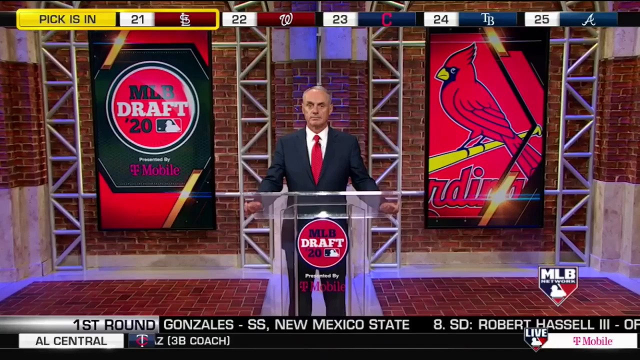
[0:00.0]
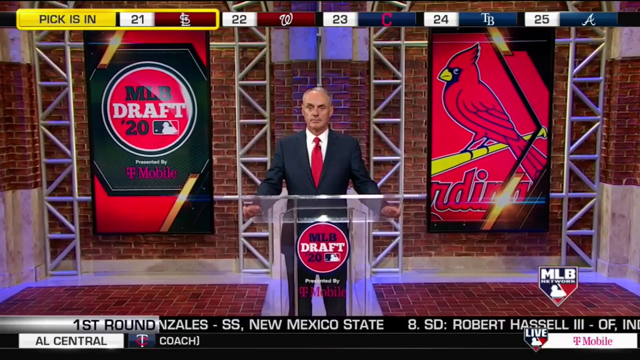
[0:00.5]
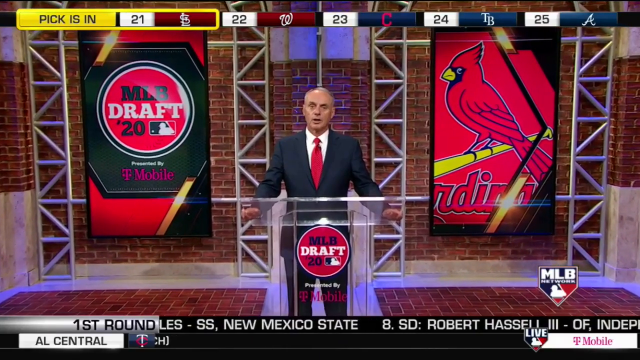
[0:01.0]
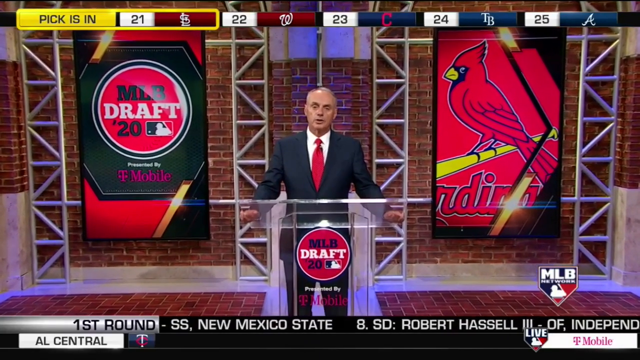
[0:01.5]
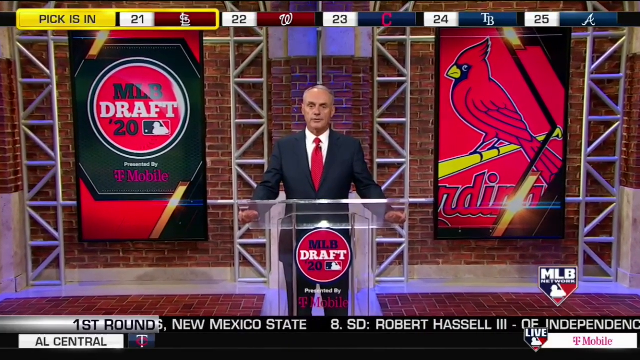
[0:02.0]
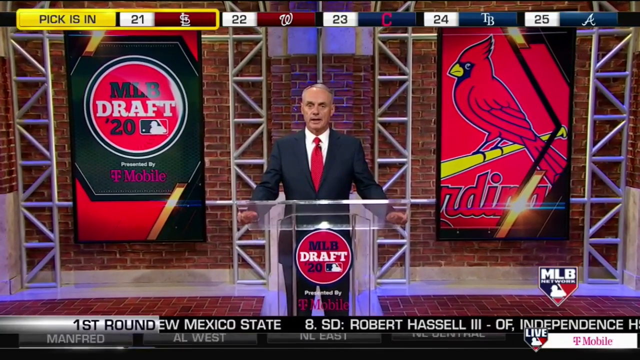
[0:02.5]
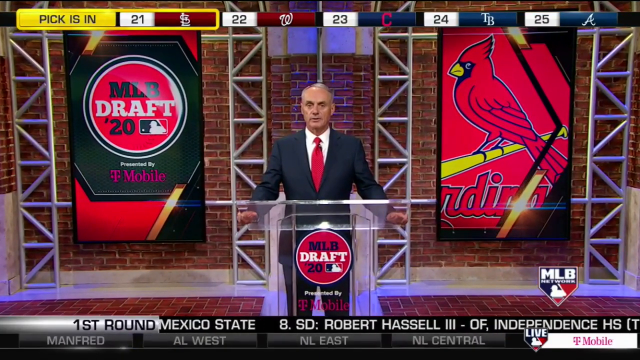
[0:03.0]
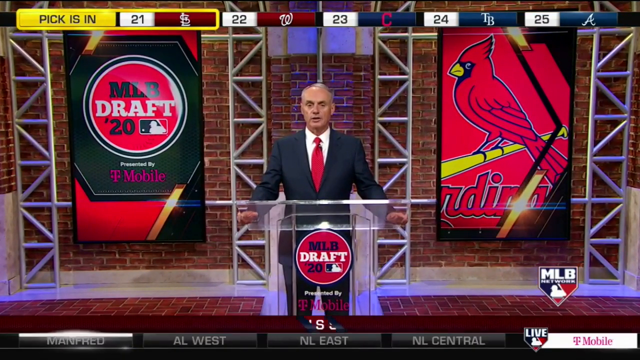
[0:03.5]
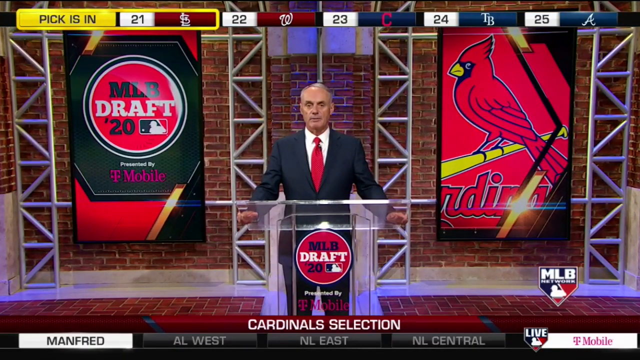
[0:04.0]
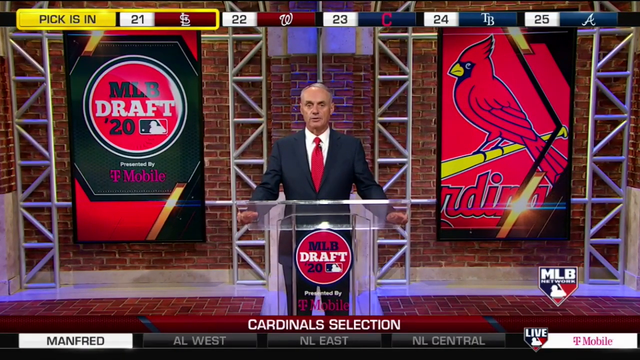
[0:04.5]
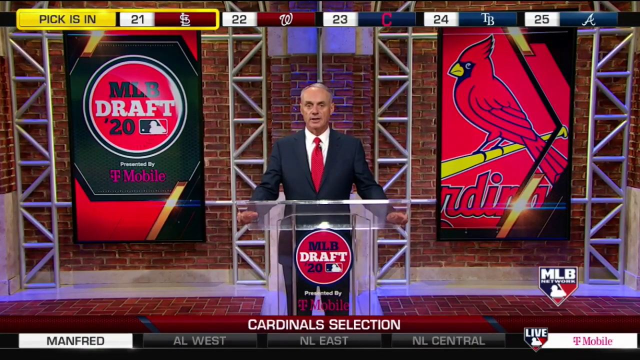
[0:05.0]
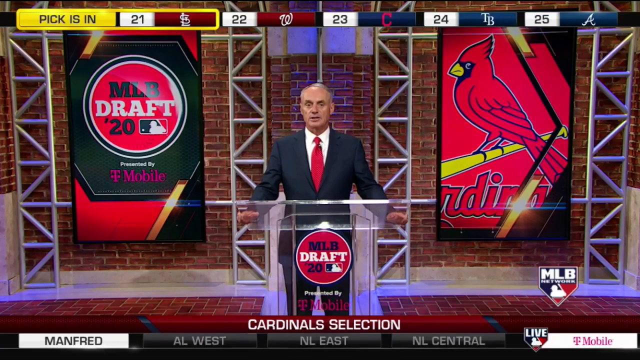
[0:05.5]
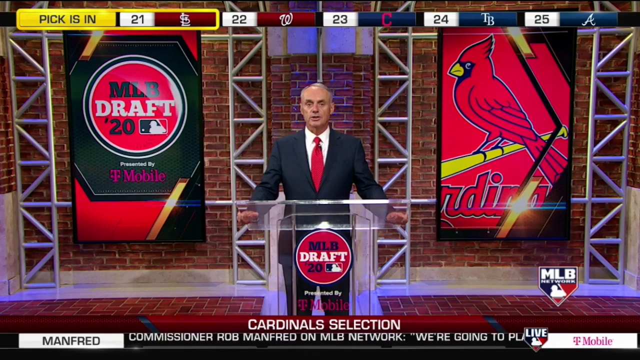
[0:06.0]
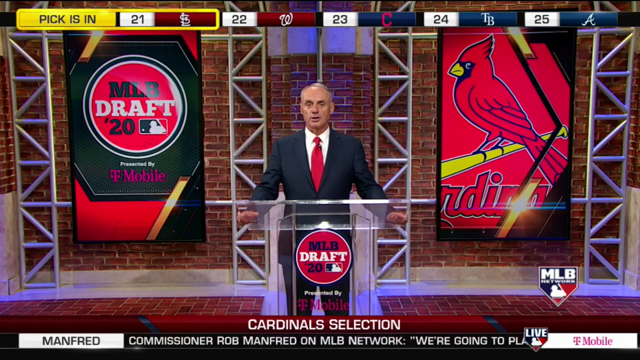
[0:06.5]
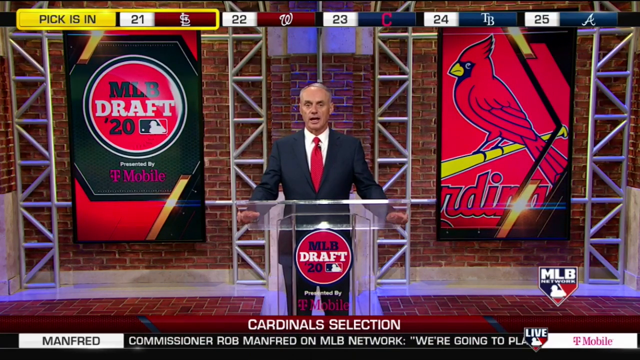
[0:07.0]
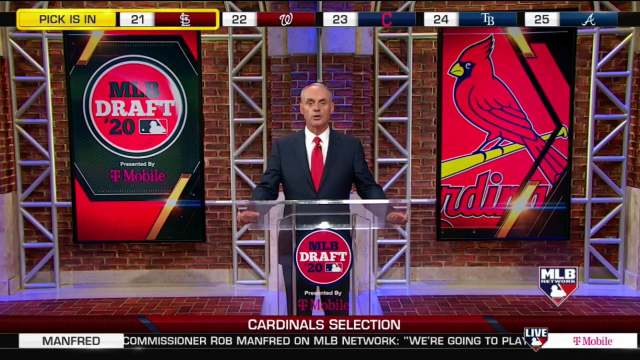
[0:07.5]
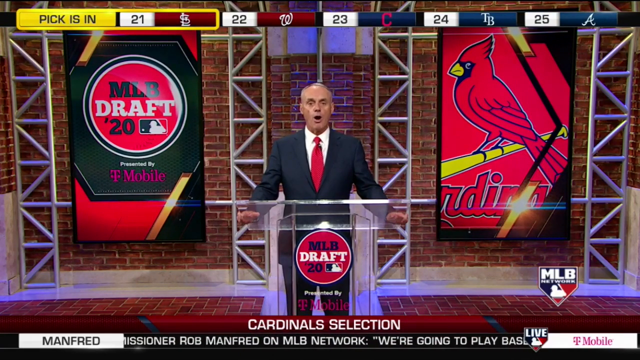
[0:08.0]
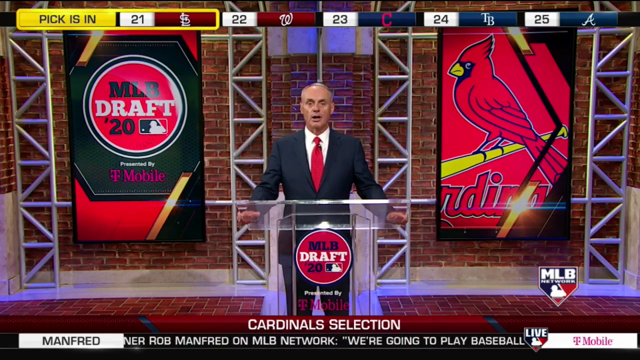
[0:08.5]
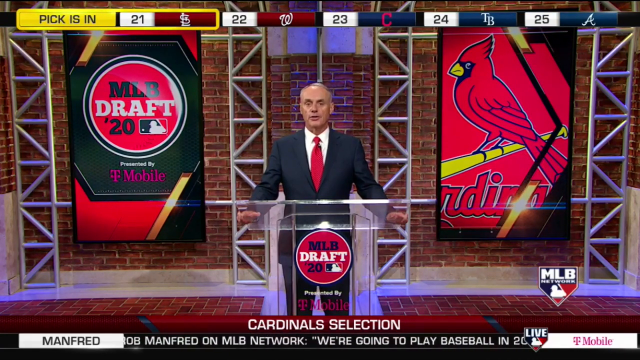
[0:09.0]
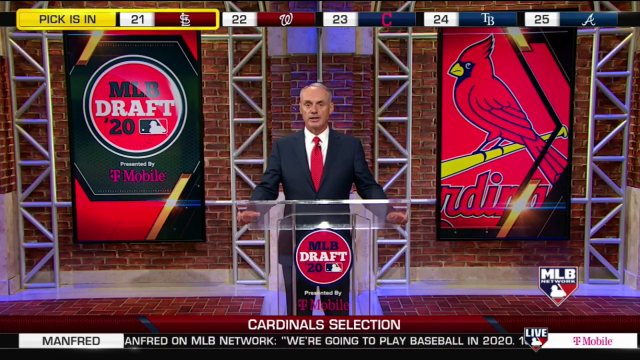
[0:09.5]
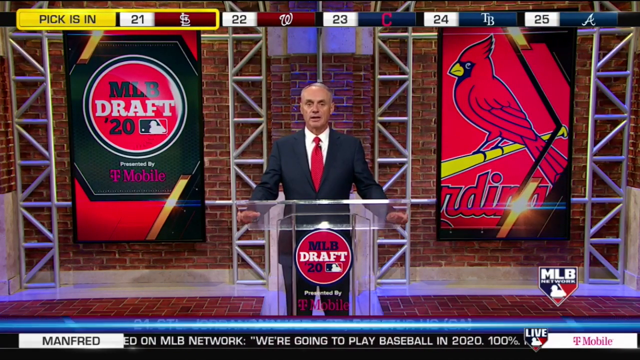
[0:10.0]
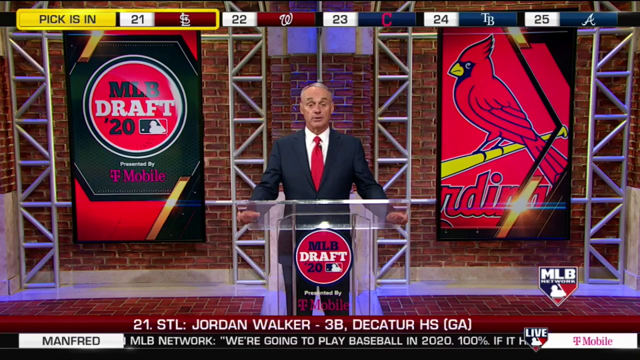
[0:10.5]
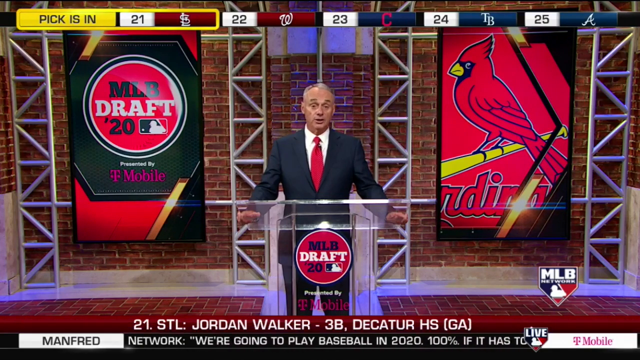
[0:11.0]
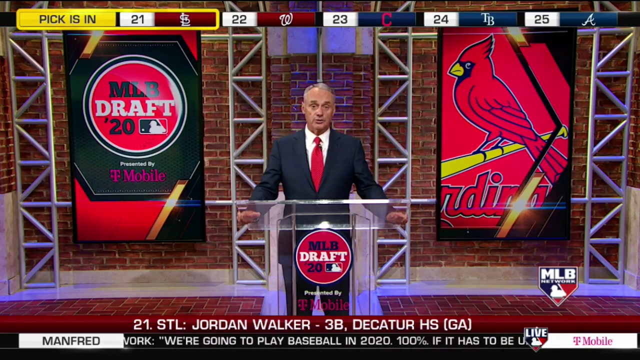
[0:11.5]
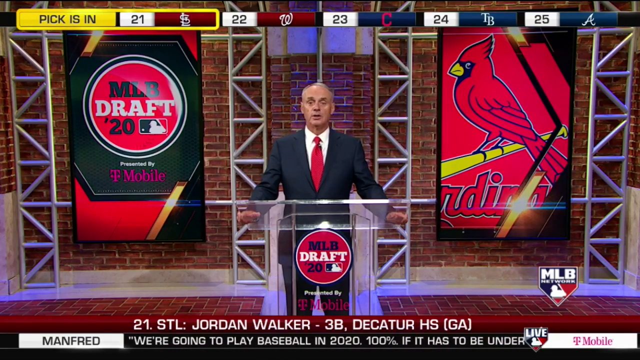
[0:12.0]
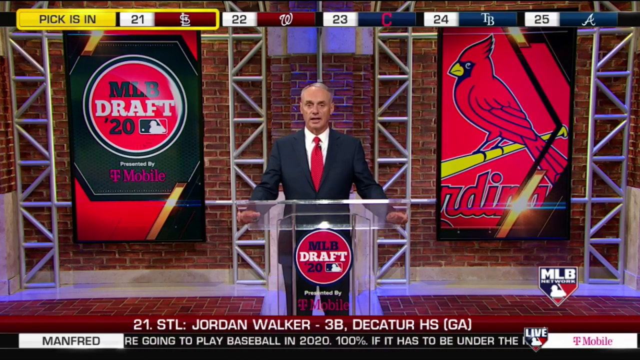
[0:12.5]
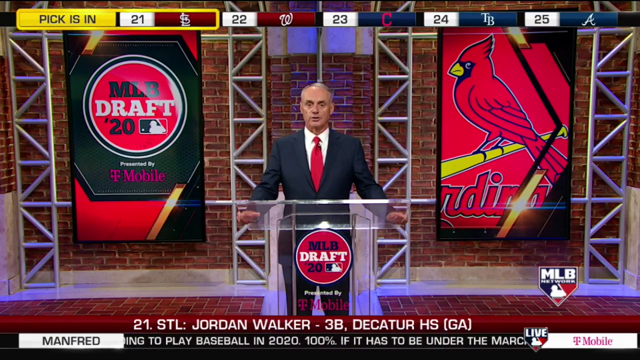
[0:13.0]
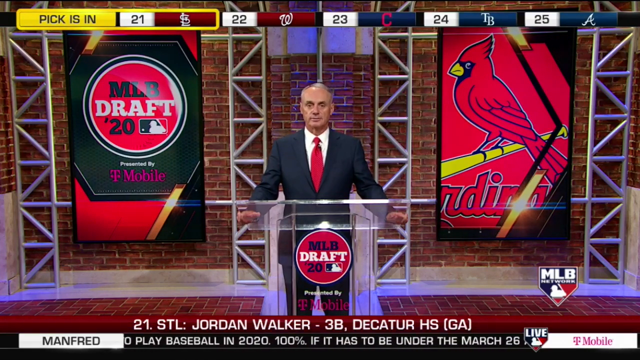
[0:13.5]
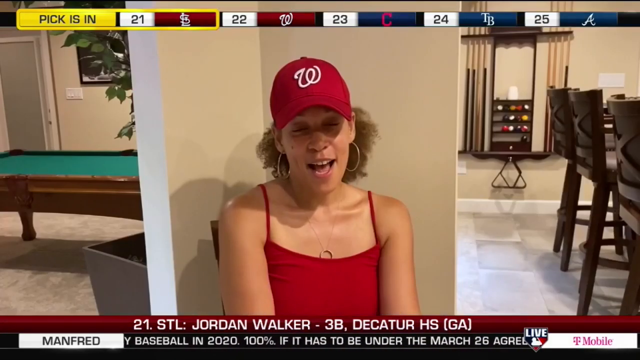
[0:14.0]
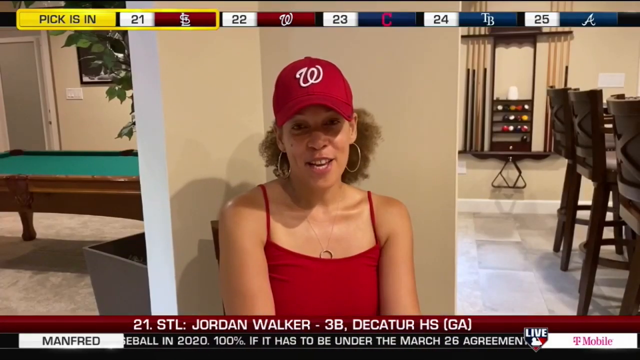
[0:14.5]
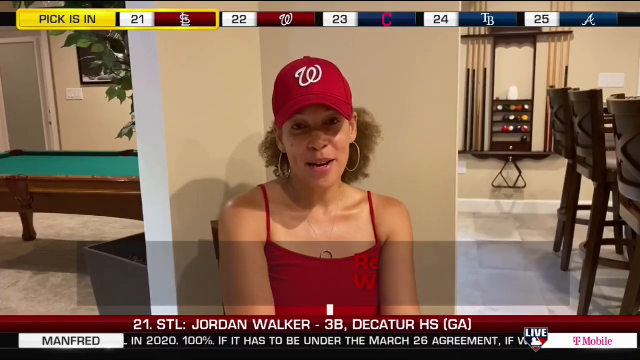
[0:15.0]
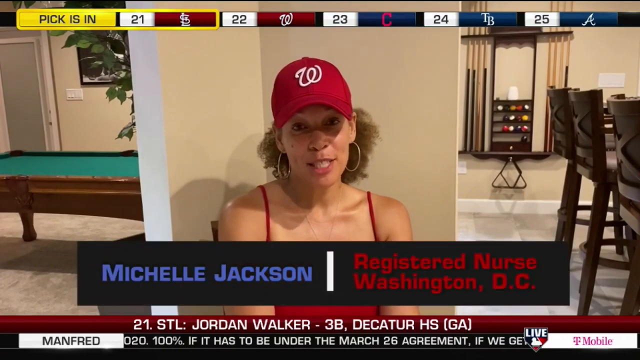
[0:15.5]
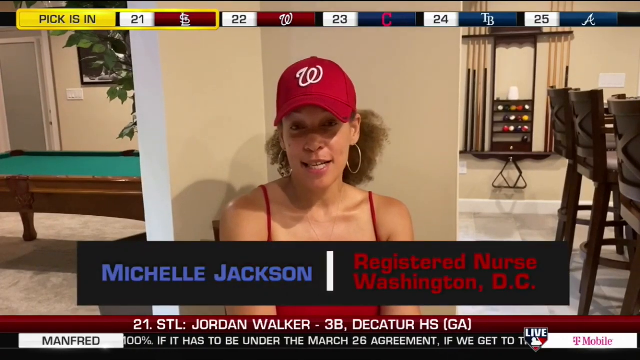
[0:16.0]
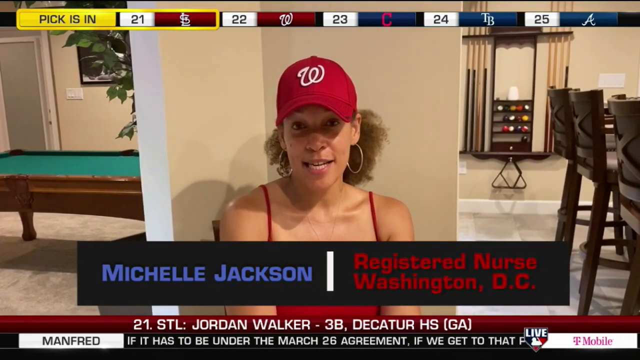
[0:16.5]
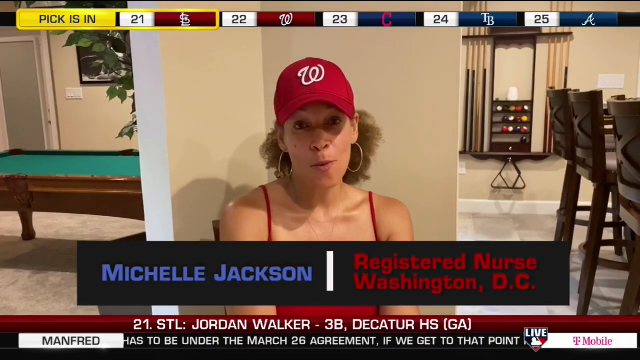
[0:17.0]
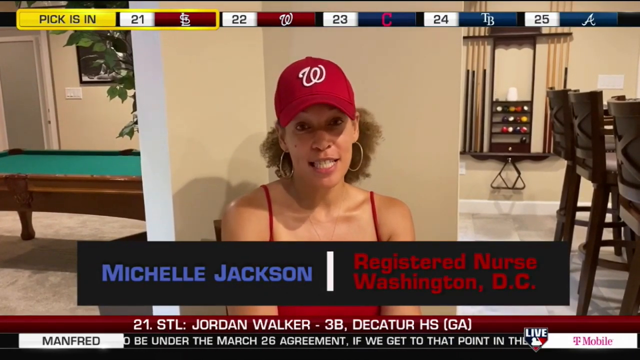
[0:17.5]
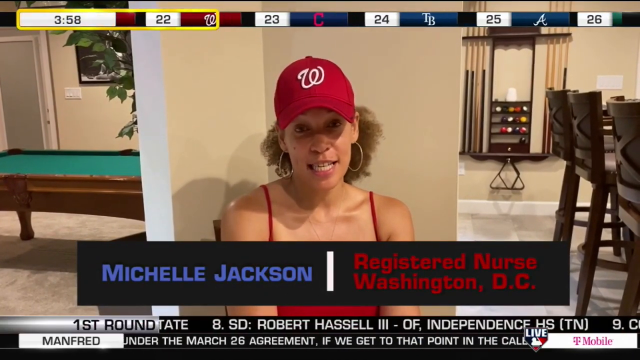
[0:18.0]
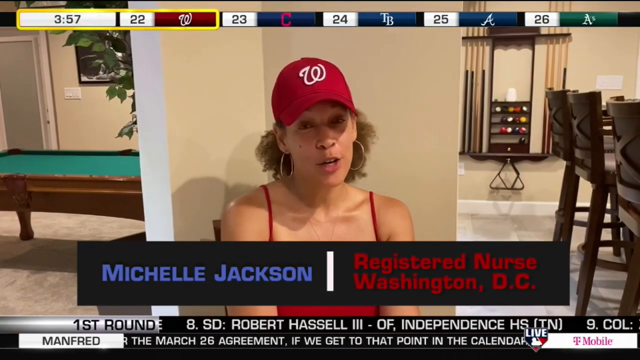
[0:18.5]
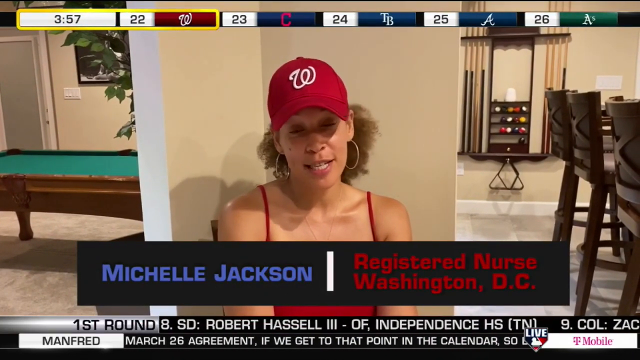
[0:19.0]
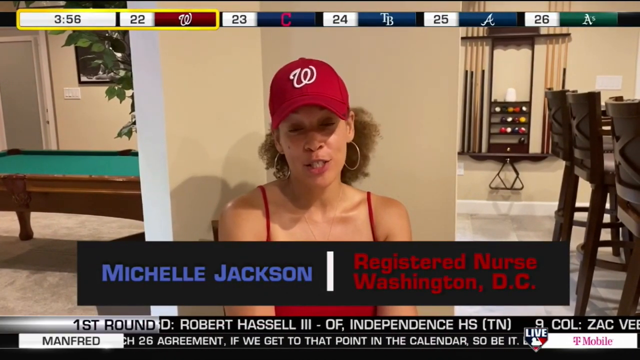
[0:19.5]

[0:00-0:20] A man stands behind a clear glass podium that has an MLB Draft symbol on a red background on its front. To his left is a banner reading "MLB Draft 20 presented by T-Mobile," and on his right is an image of the Cardinals logo. He tilts his head slightly to the right as he speaks, standing with his hands on either side of the podium. The video cuts to a woman in a red tank top and a red Washington hat, with hoop earrings and curly hair pulled back. A banner at the bottom of the screen reads "Michelle Jackson, registered nurse, Washington D.C." She appears to be having a conversation with the man behind the podium. In her setting, there is a pool table to her left, a rack of pool balls and cues behind her to the right, and what appears to be a bar with high chairs to her right. The video then cuts back to the man behind the podium.